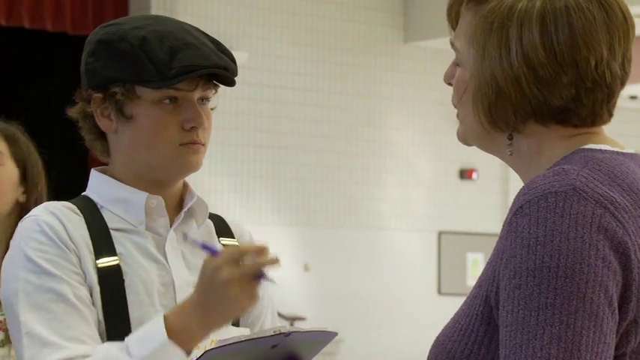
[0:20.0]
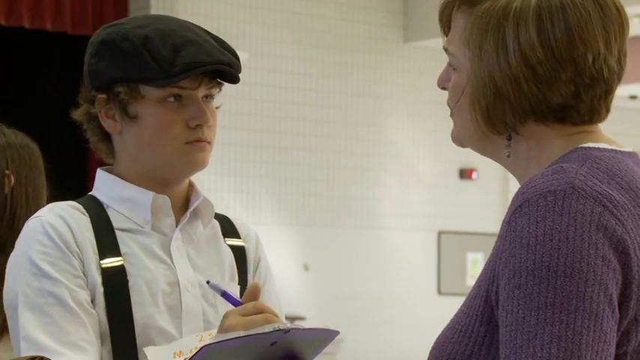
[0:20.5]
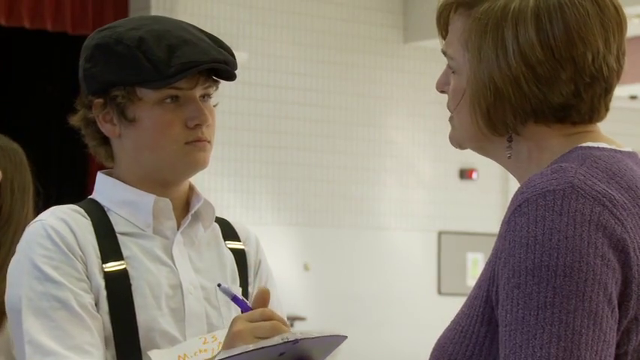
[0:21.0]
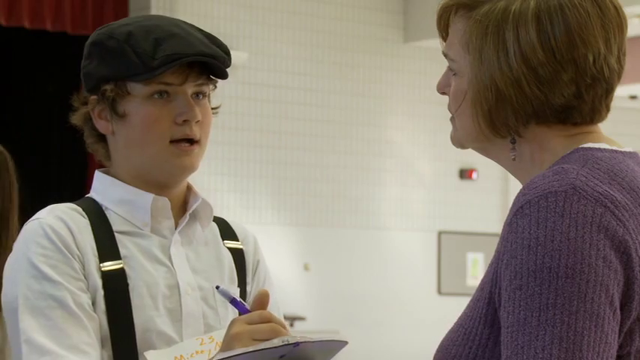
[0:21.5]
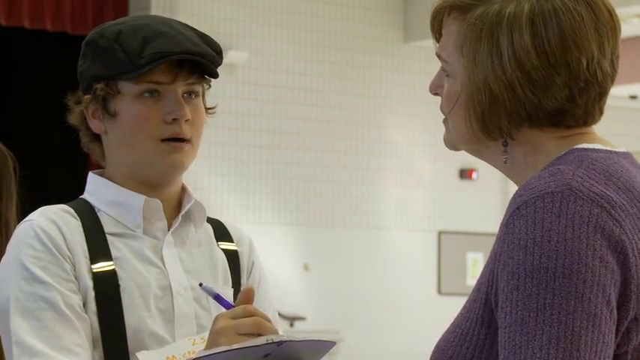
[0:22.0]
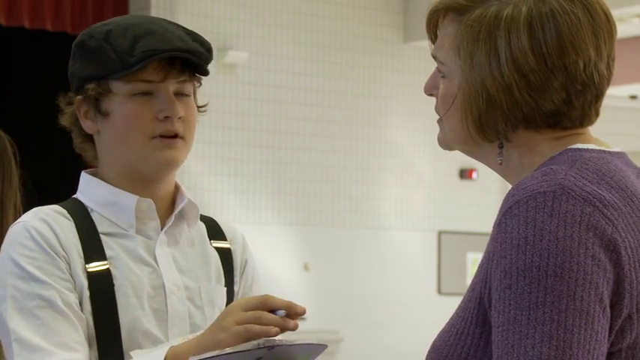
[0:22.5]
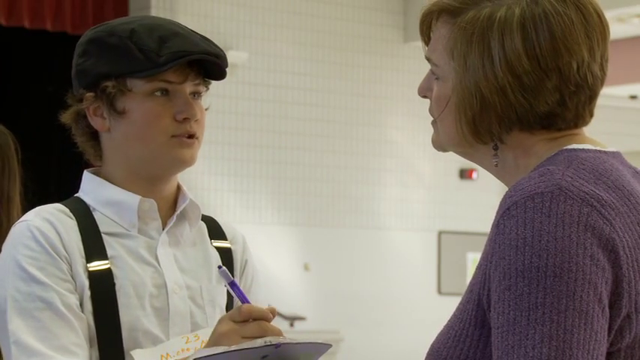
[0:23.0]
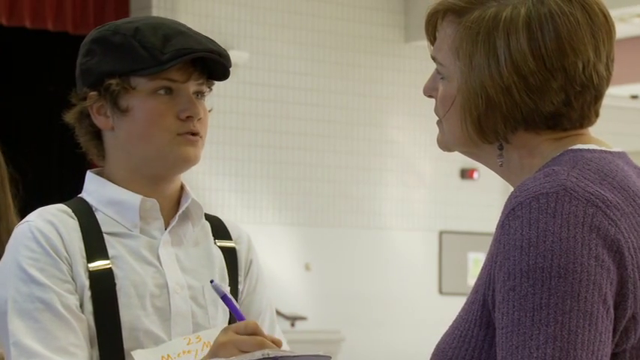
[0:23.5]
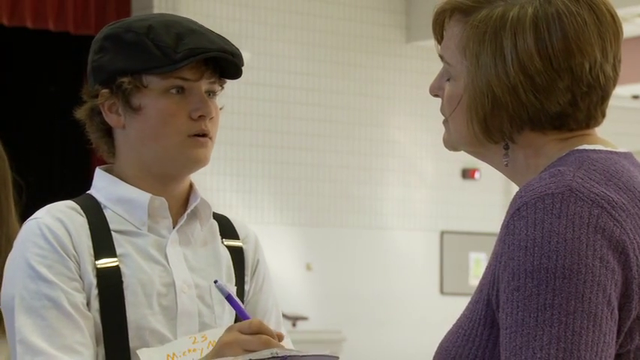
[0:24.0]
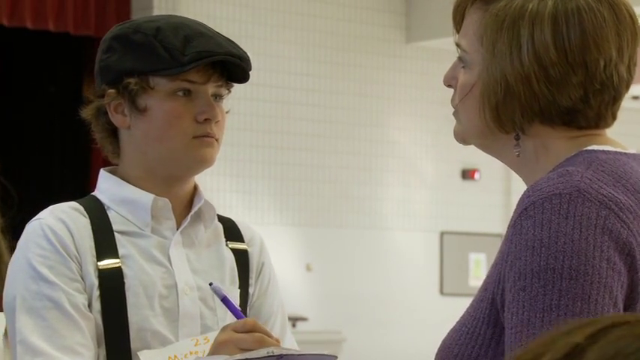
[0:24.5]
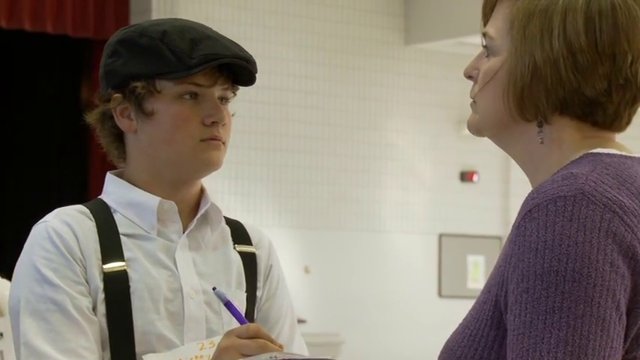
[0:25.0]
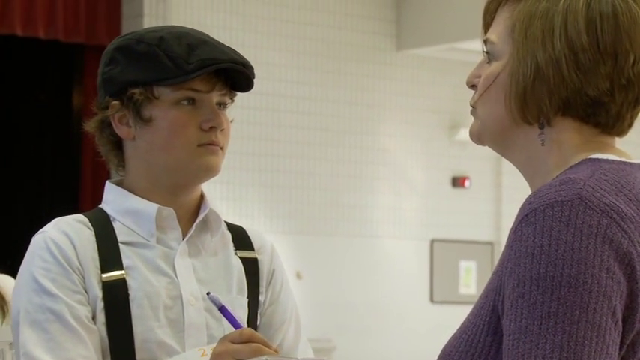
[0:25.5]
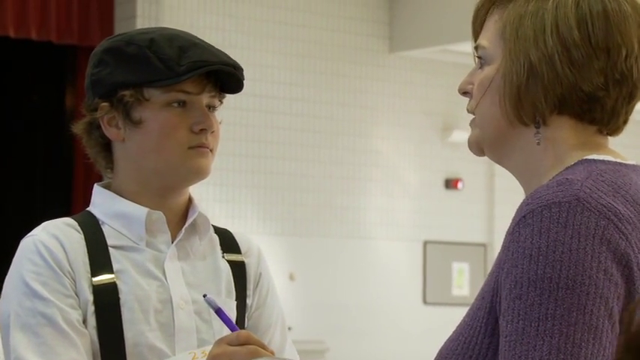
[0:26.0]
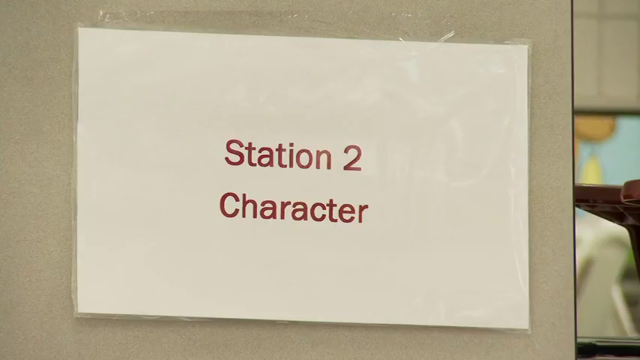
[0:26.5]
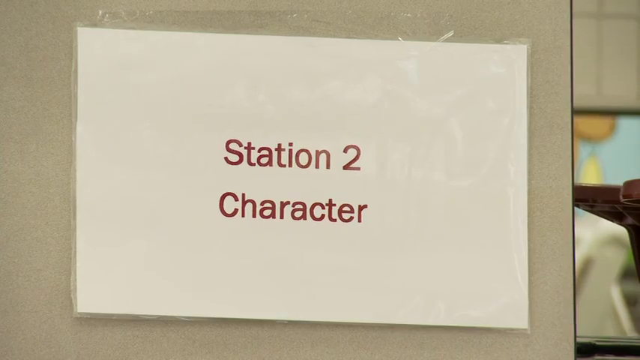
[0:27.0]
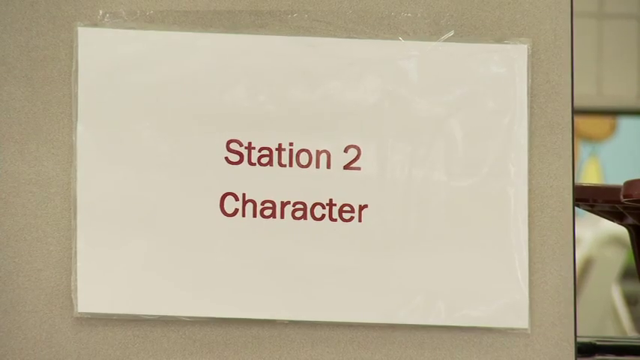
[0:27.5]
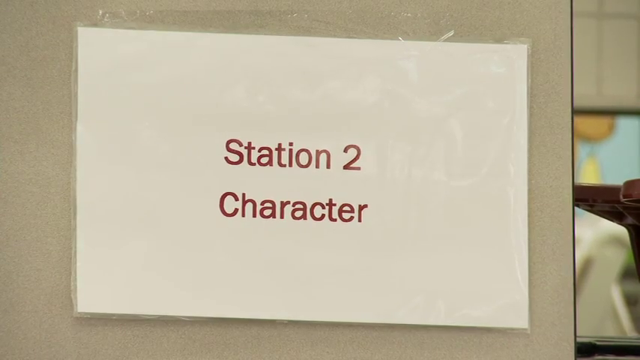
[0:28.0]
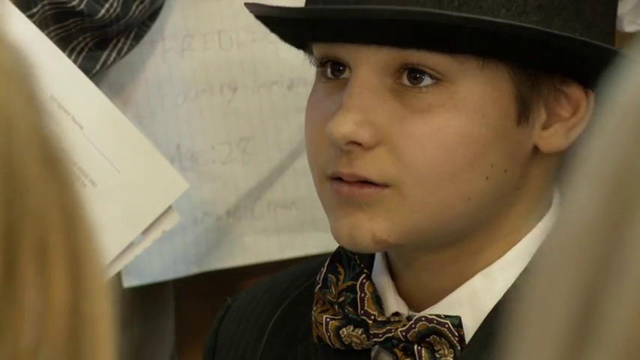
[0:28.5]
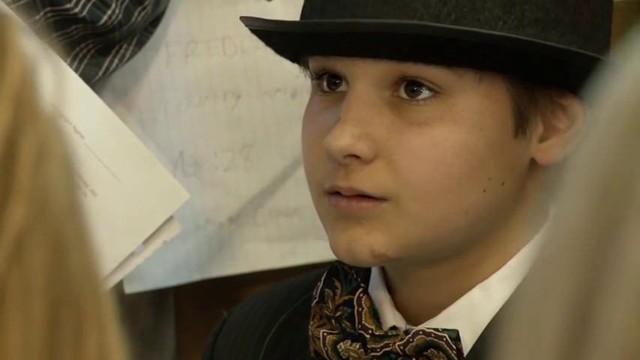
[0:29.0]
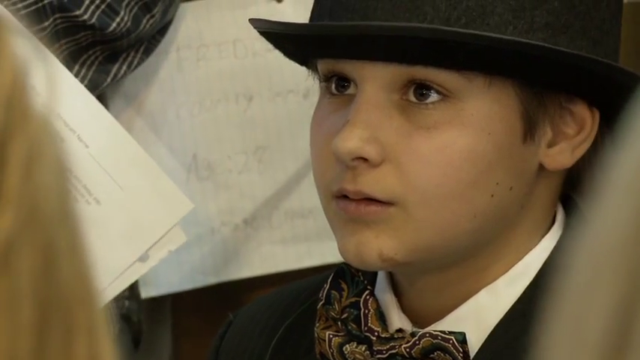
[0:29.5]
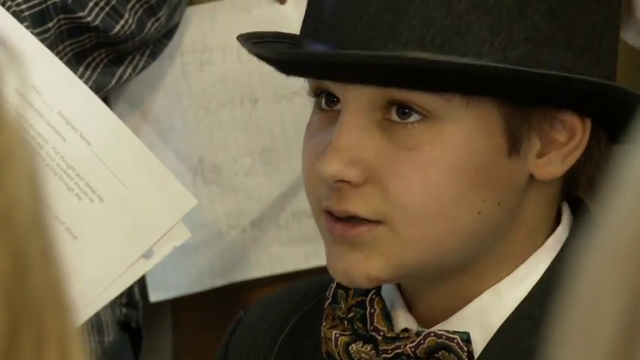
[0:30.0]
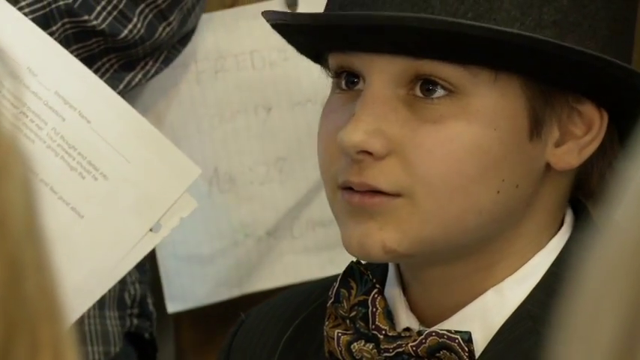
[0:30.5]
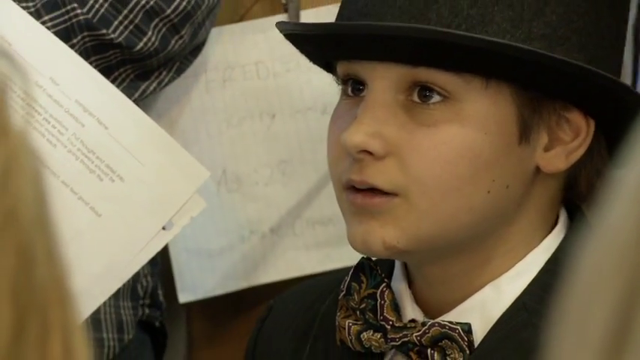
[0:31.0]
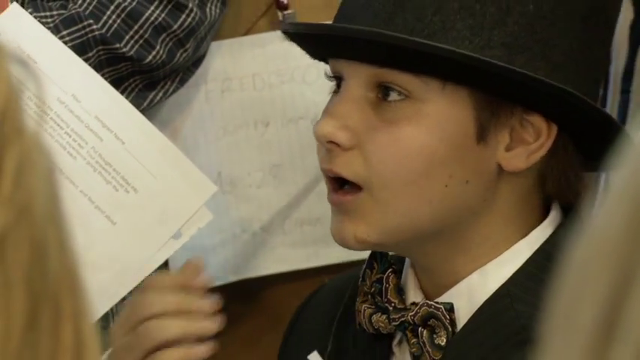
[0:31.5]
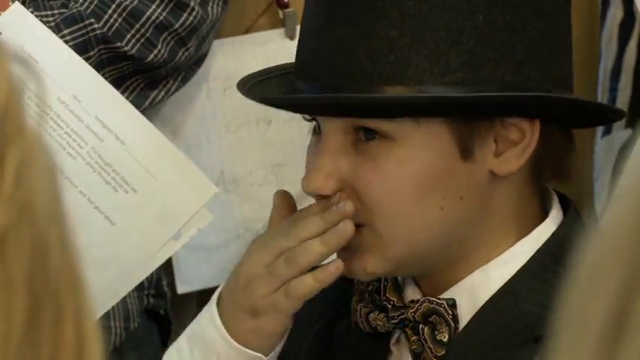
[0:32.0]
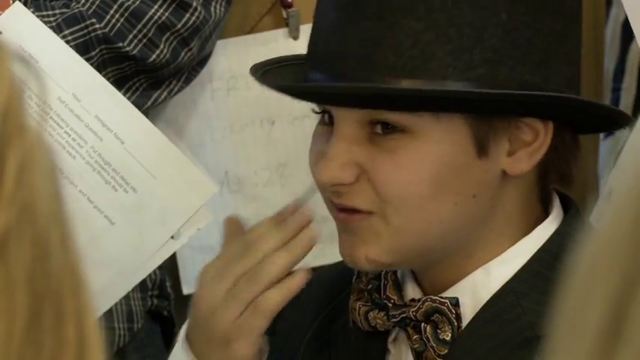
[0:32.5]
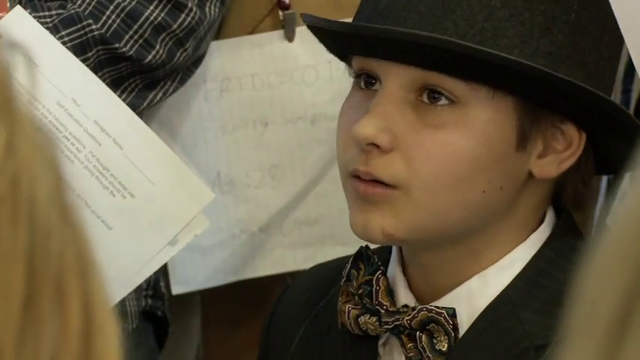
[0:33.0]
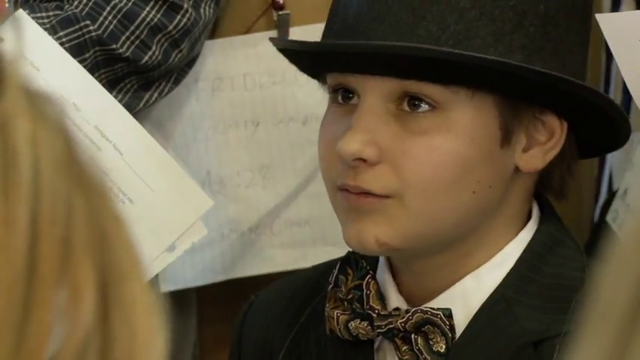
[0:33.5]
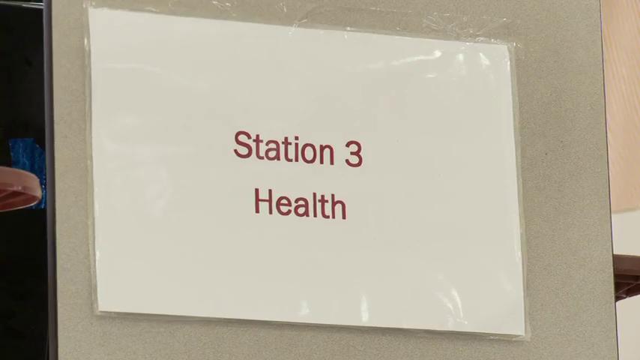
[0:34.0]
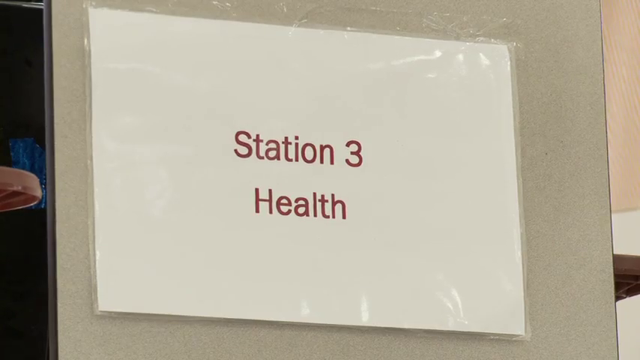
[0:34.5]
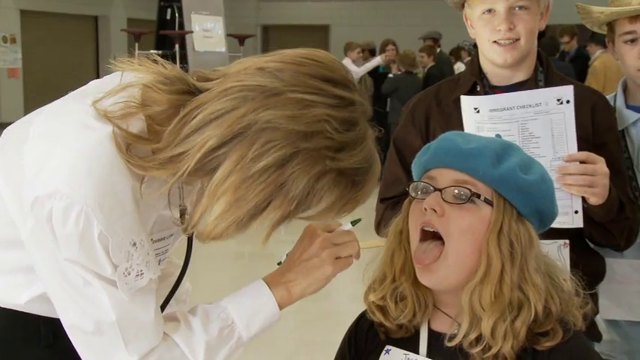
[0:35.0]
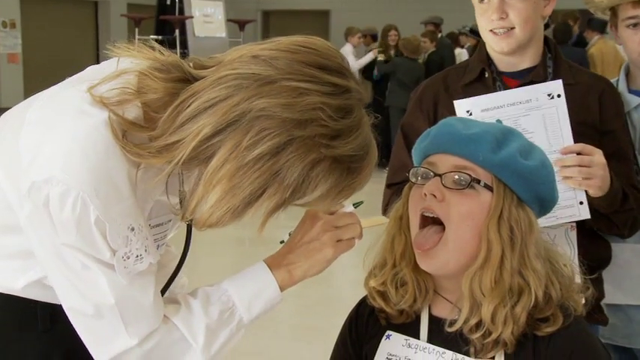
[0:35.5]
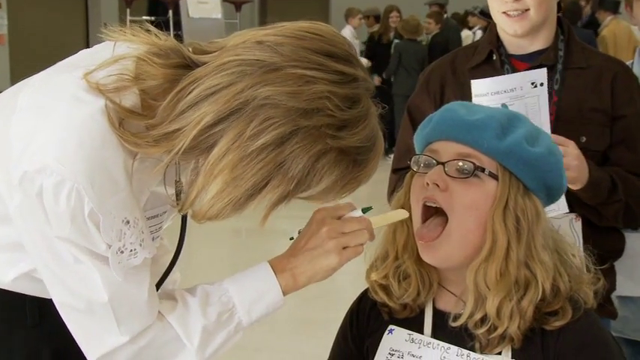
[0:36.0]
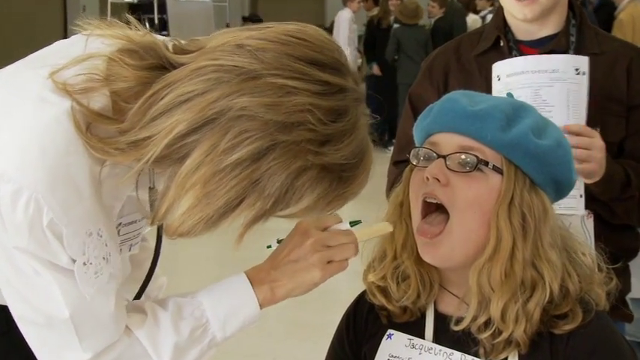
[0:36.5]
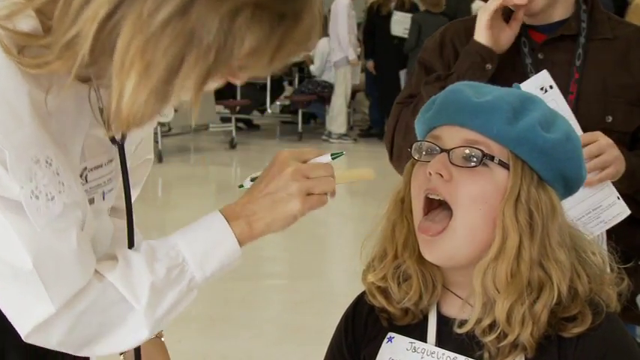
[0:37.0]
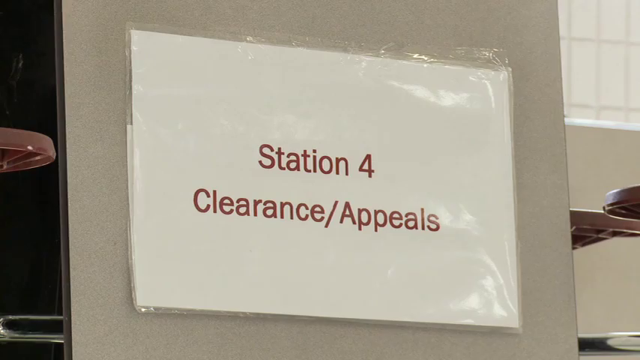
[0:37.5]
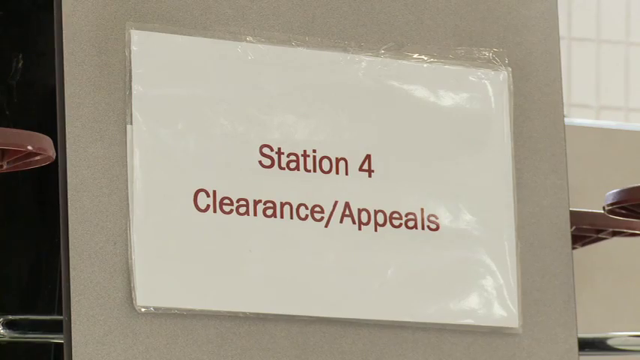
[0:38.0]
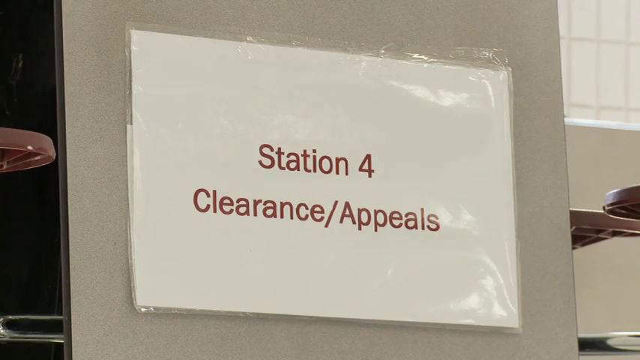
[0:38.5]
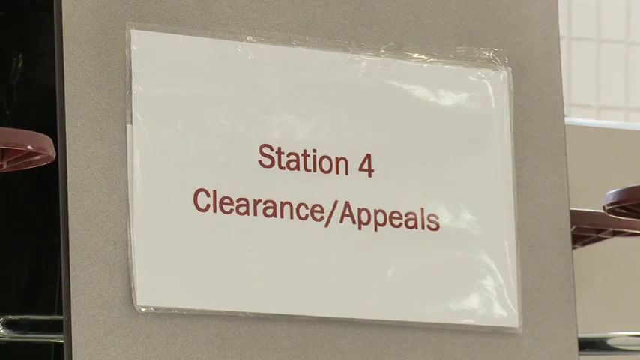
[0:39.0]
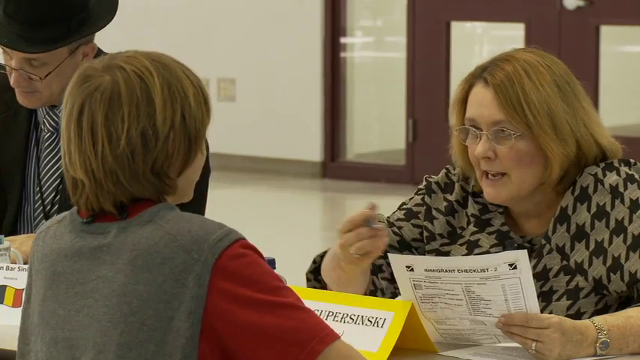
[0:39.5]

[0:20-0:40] More people appear in period clothing, including a man in what looks like a newsy outfit. A sign reads "Station 2 Character," and the camera zooms in on a boy in a bowler hat and a tuxedo. A girl named Jacqueline is getting some sort of health clearance, and another person with a paper talks with a woman. Many people are wearing costumes. There is a Station 3 for health and a Station 4 for clearance and appeals, and it looks like people might be interviewing for something. Someone has something that appears to say "Freedom" or "Fred." The scene is disjointed, and the setting looks like a high school.